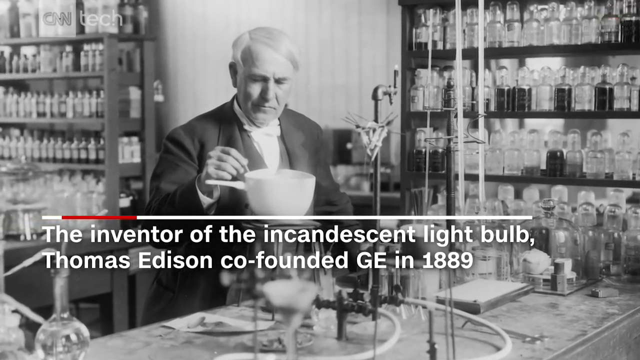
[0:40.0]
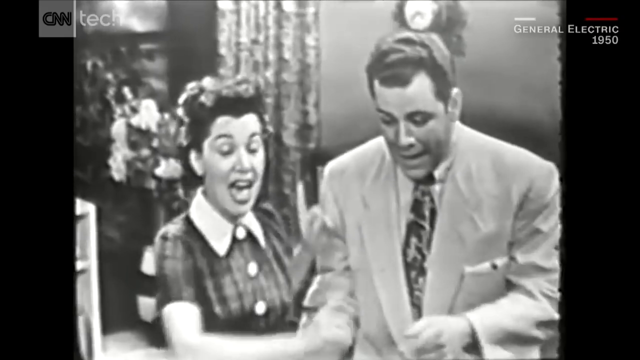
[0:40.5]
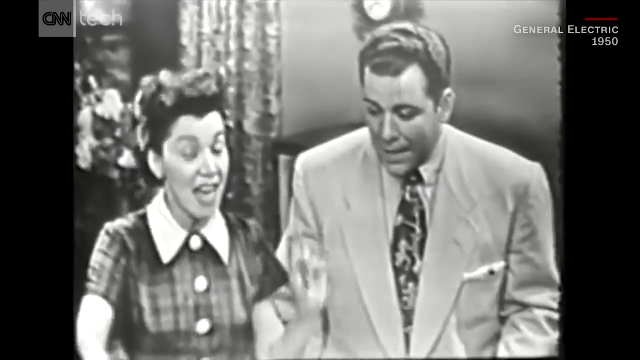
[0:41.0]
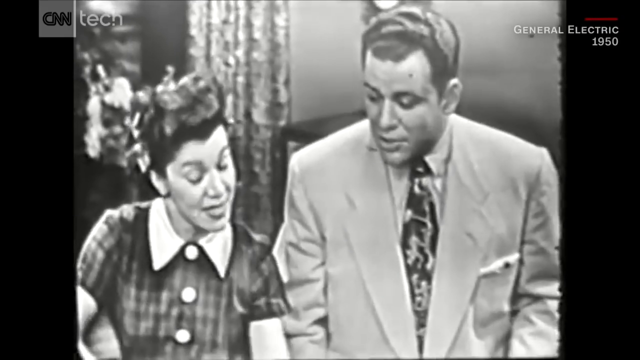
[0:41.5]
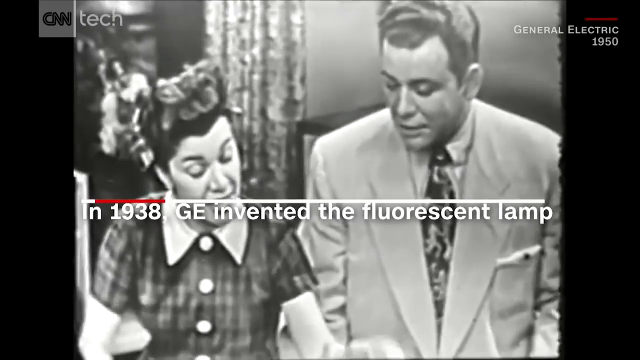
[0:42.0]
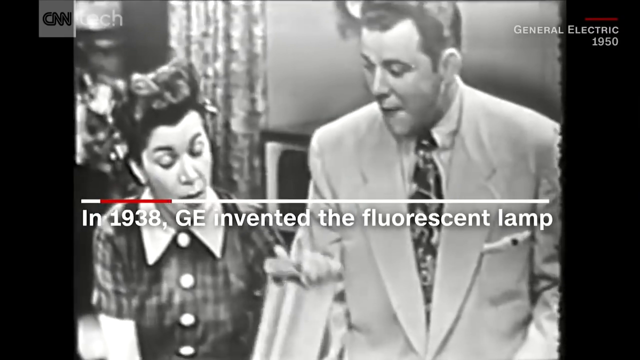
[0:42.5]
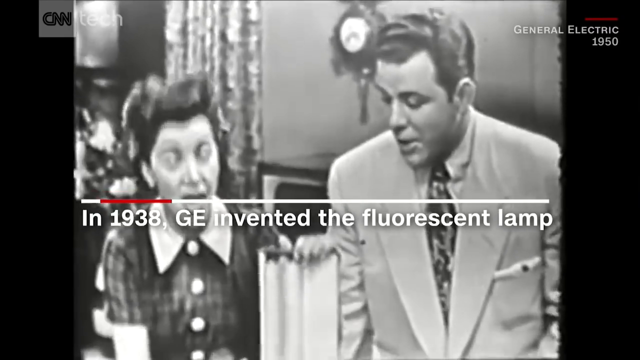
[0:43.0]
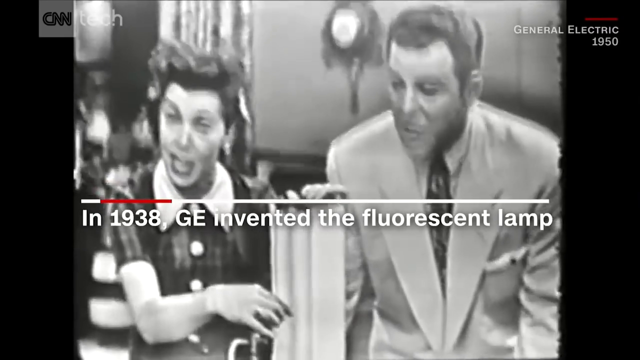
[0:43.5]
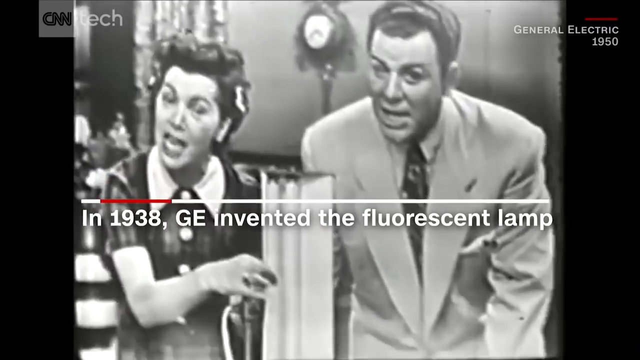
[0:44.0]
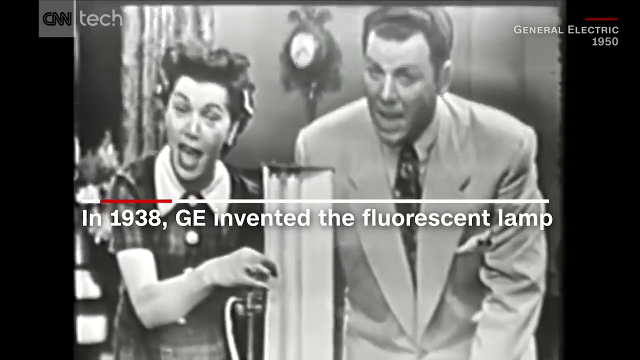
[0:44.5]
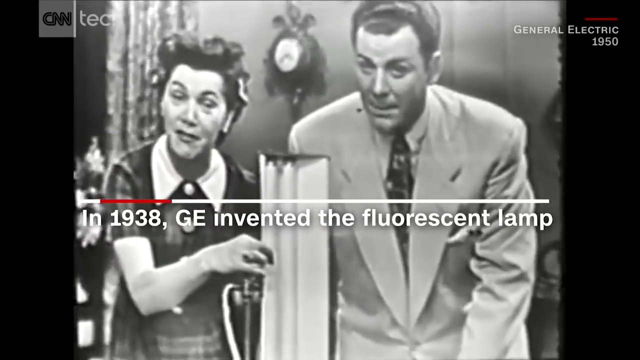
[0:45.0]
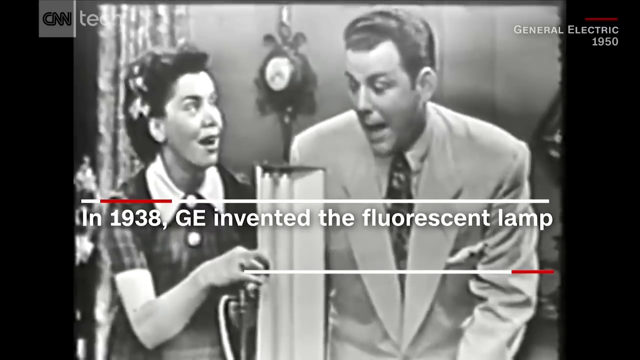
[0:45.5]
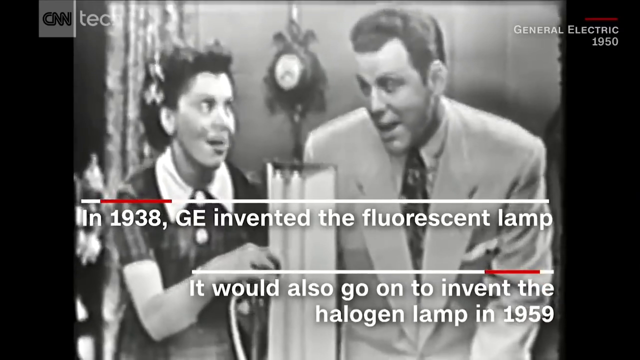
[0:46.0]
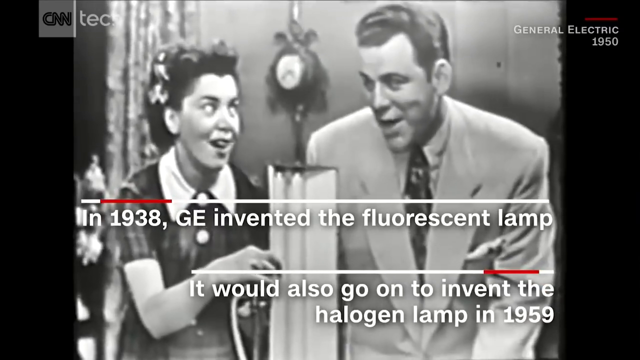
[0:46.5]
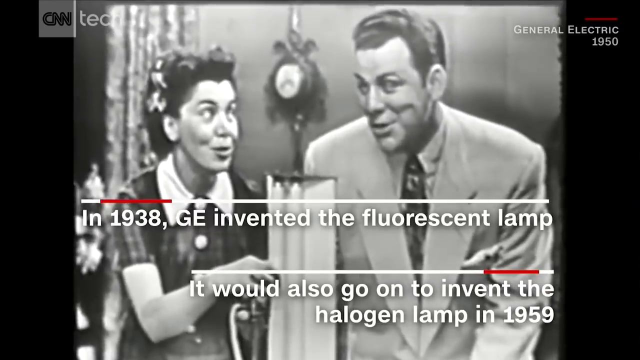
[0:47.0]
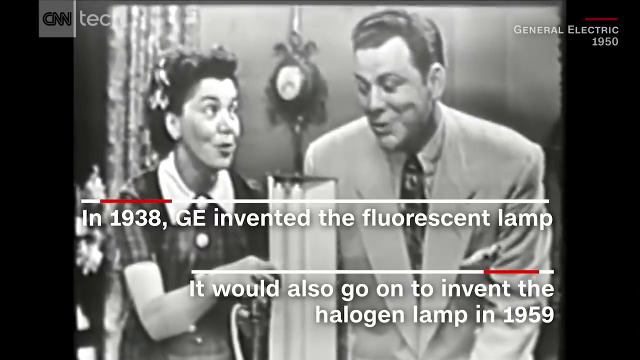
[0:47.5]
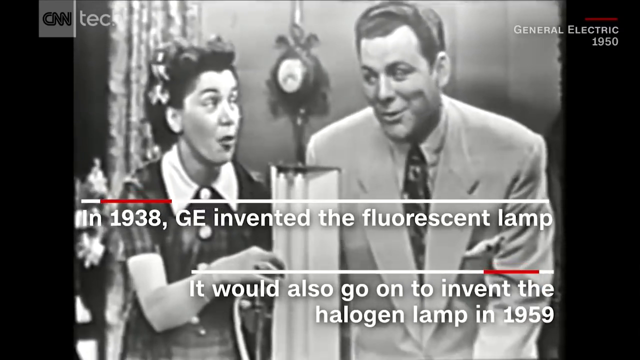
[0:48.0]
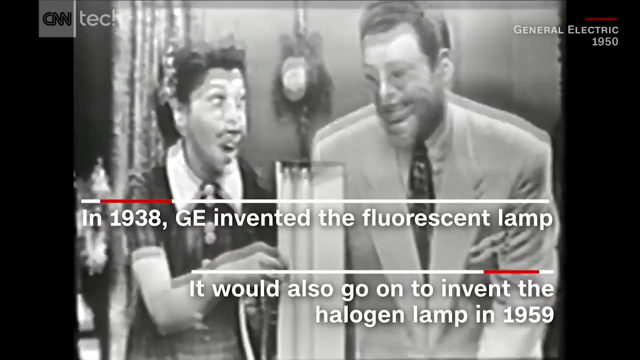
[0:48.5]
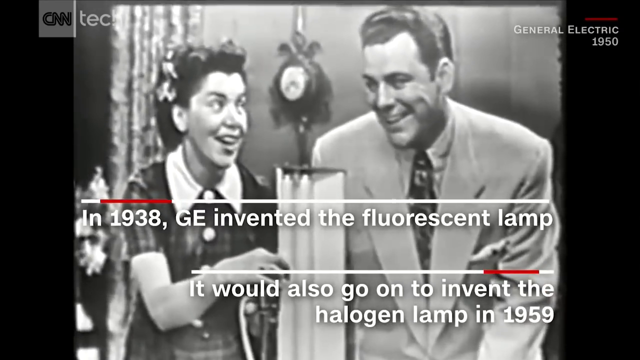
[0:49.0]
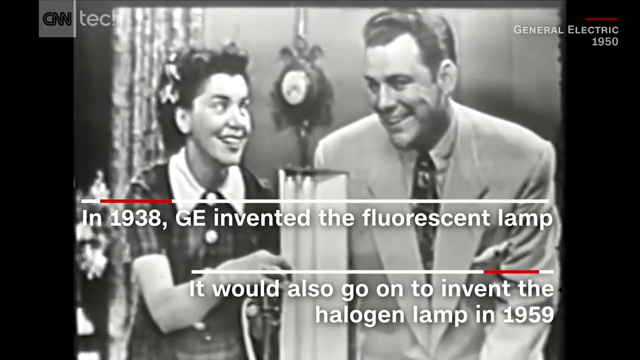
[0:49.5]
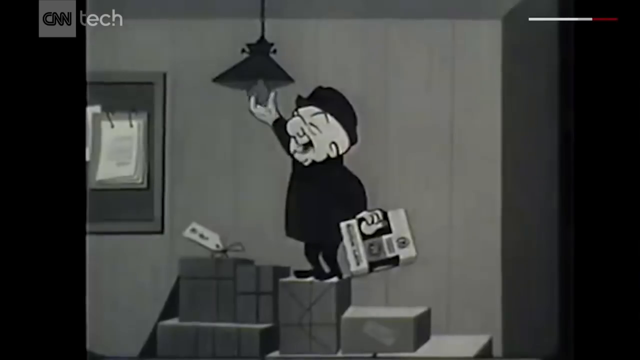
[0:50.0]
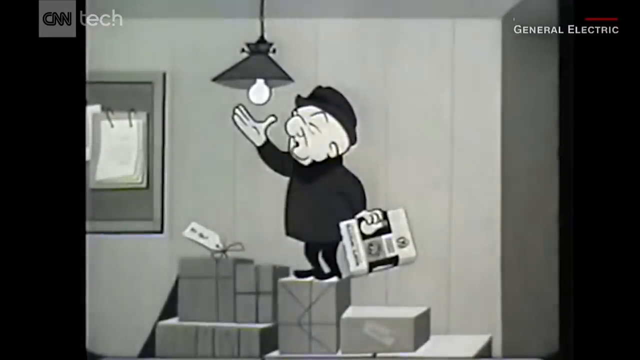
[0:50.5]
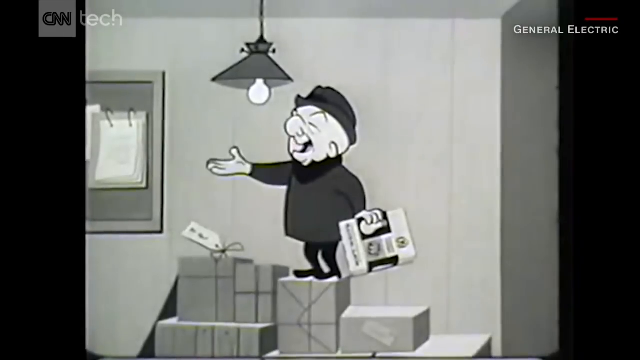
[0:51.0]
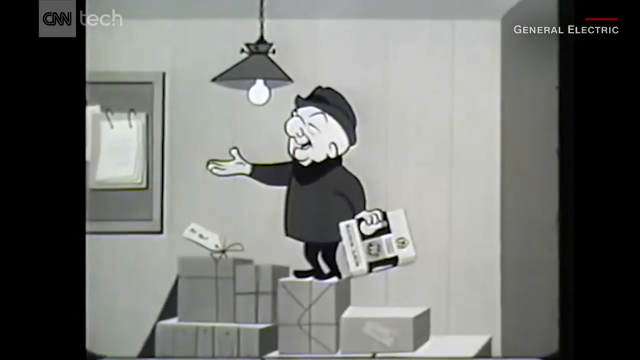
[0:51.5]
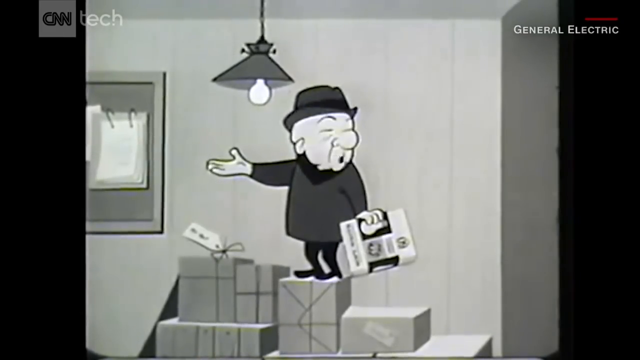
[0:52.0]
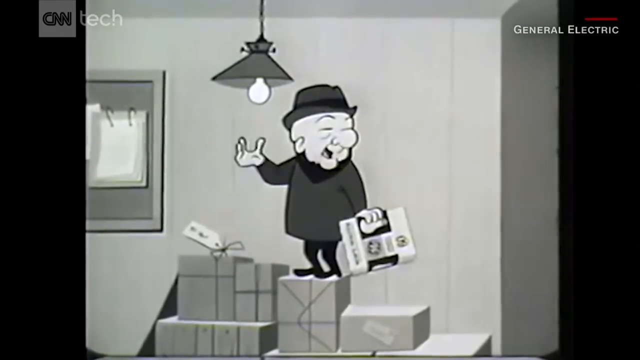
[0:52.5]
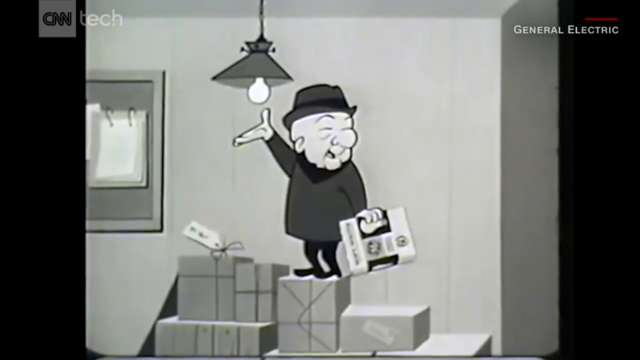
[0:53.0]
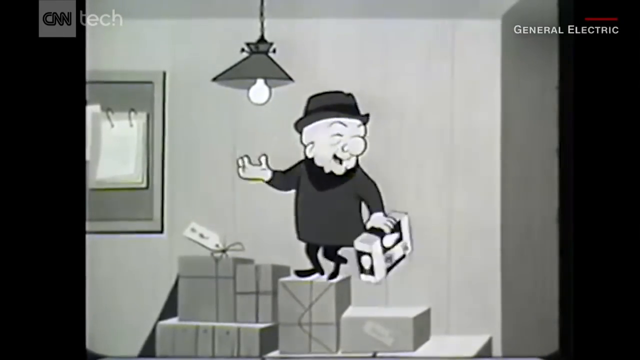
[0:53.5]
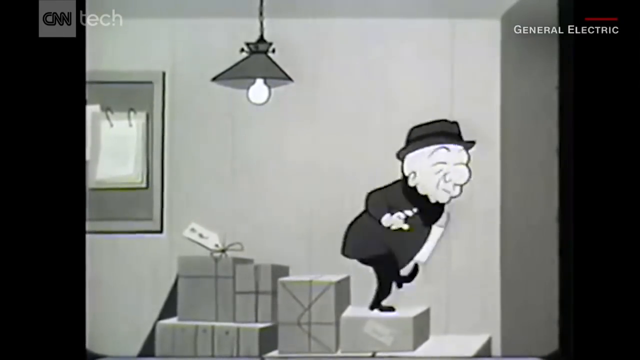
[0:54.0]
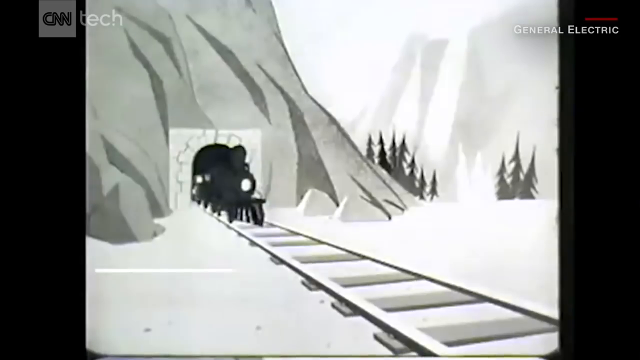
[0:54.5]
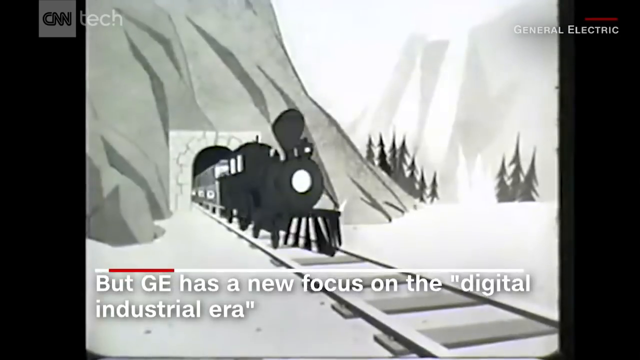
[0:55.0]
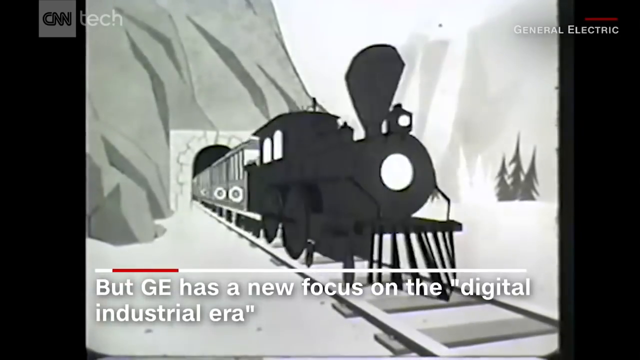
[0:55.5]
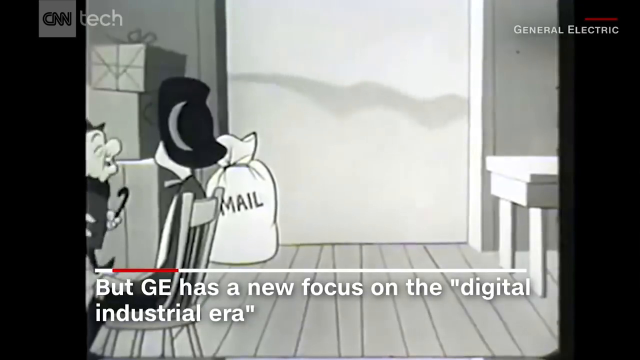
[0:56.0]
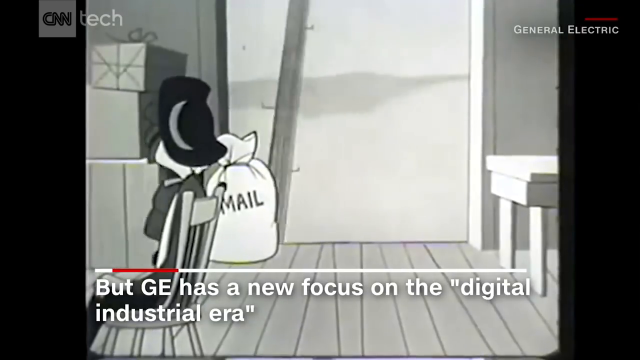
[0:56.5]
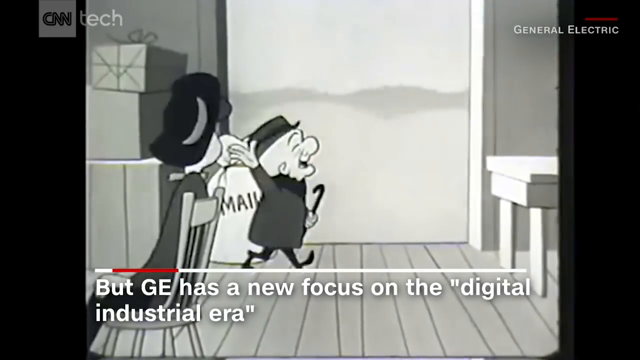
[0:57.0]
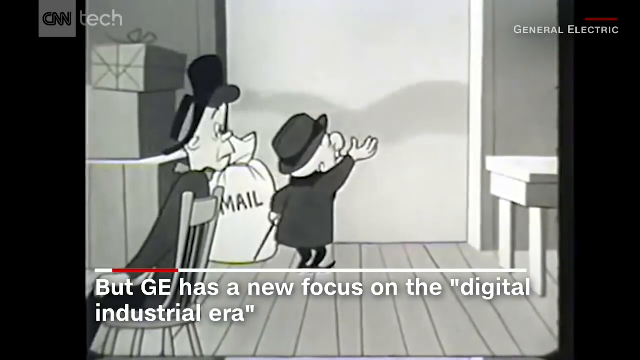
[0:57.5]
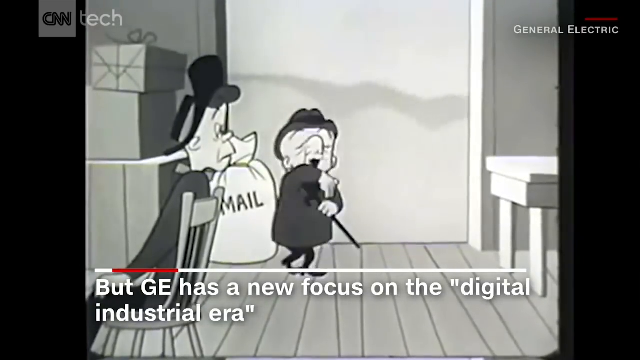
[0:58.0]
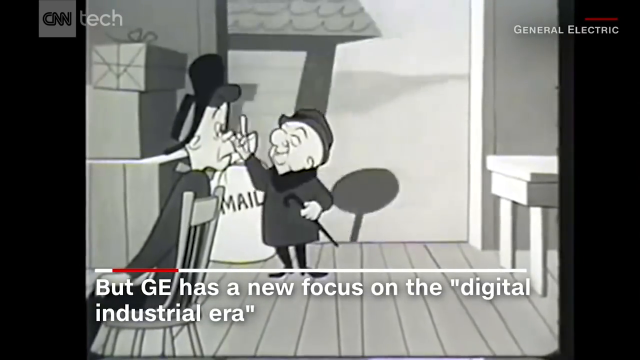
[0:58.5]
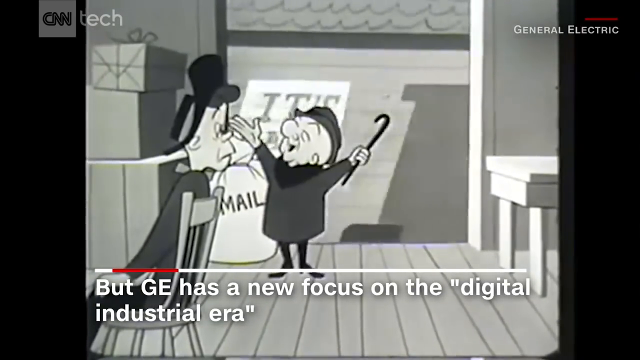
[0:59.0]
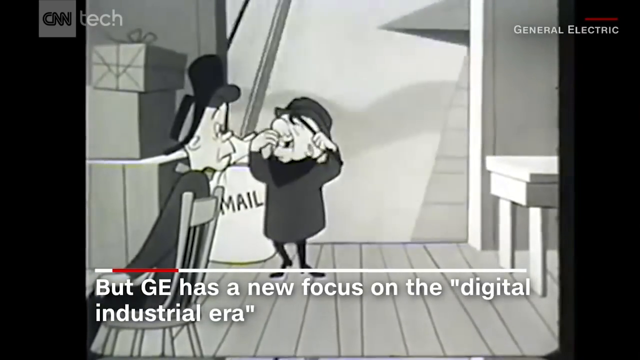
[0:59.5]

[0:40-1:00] A black and white photo of a laboratory shows a man who is presumably Thomas Edison: an older Caucasian man with gray-white hair wearing a suit. Judging from the contrast, the suit is presumably black or gray, with a white button-up shirt and a bow tie. Text across the bottom reads "the inventor of the incandescent light bulb Thomas Edison co-founded GE in 1889." The video then cuts to a movie or commercial clip of some kind, with "General Electric 1950" in the top corner, so it is probably a TV commercial from 1950. Across the middle of the screen the text reads "in 1938 GE invented the fluorescent lamp." In the black and white commercial, a woman on the left wears a plaid dress with a white collar and very large buttons down the front, her hair styled in something like a finger wave. The man on the right wears a suit that would appear to be something like tan or a lighter gray. They hold up a fluorescent lamp with fluorescent bulbs inside it in the middle of the screen. Another pop-up at the bottom reads "it would also go on to invent the halogen lamp in 1959." The two characters talk with each other. The video then moves to a black and white cartoon in which a man stands on a box changing a light bulb while holding a box of GE light bulbs in his hand. A train goes down the tracks, coming through a tunnel. Text at the bottom reads "but GE has a new focus on the digital industrial era." Still in the black and white cartoon, a man and a woman are inside the train with a bunch of boxes, packages, and a sack that says "mail" on the side. As the train moves down the tracks, the man is accidentally taken outside the train.